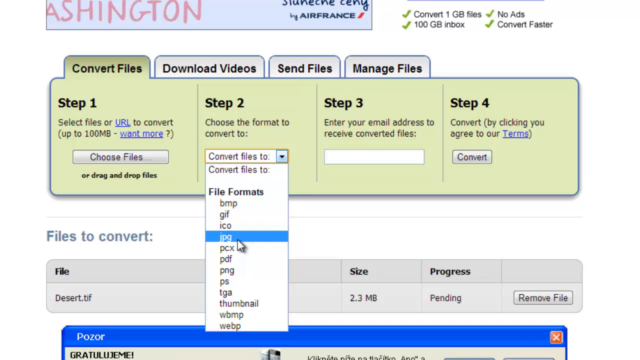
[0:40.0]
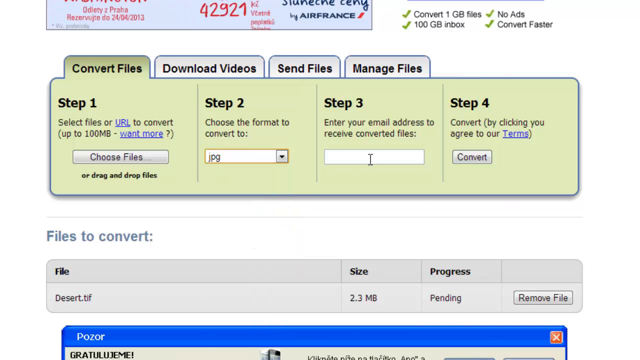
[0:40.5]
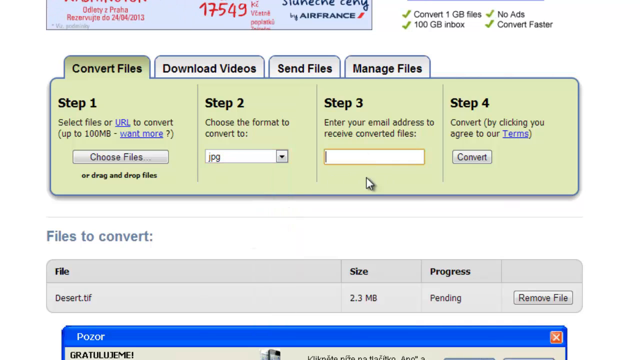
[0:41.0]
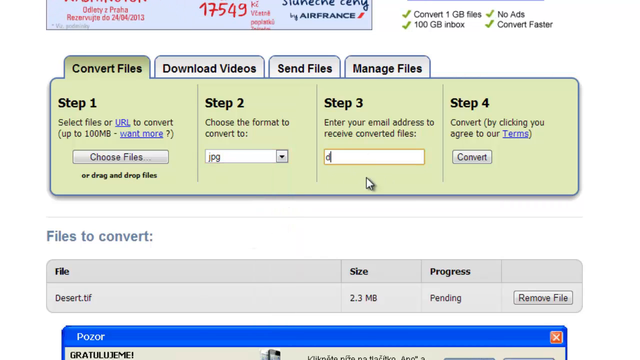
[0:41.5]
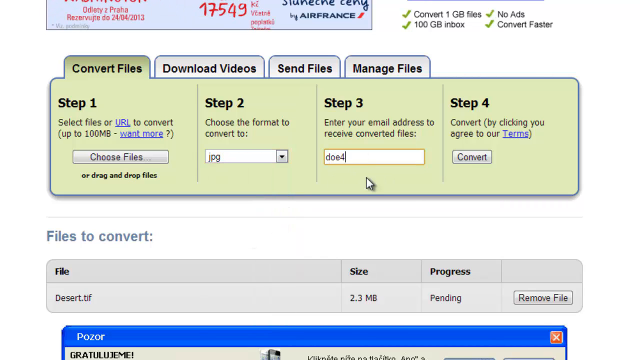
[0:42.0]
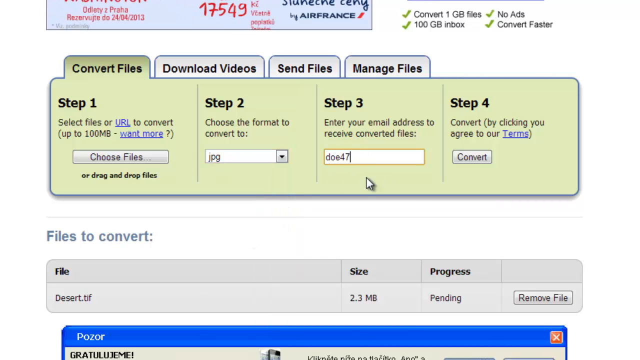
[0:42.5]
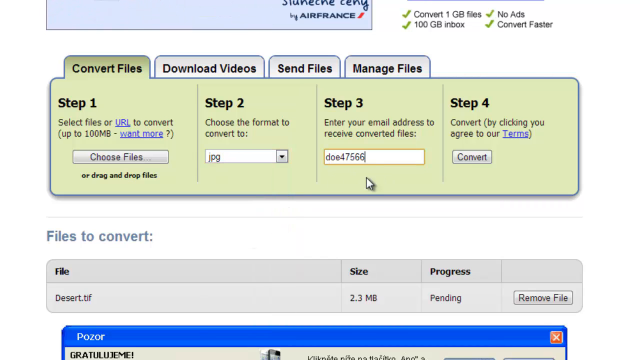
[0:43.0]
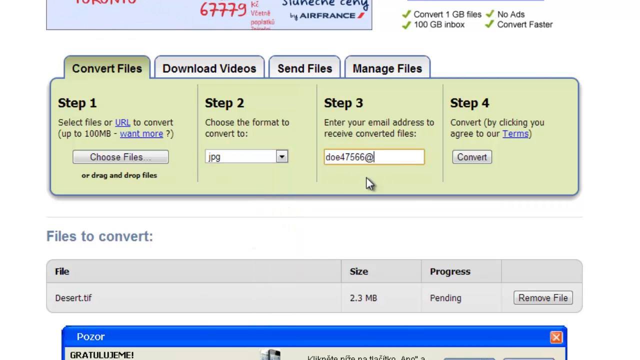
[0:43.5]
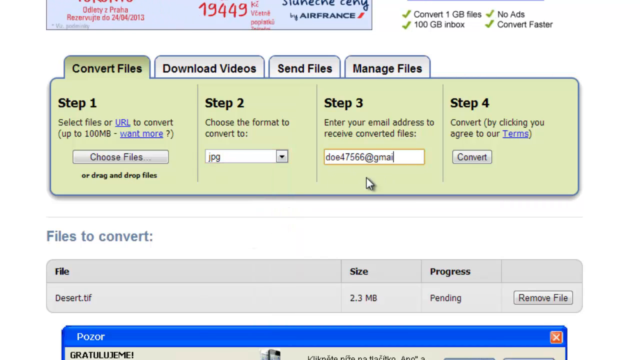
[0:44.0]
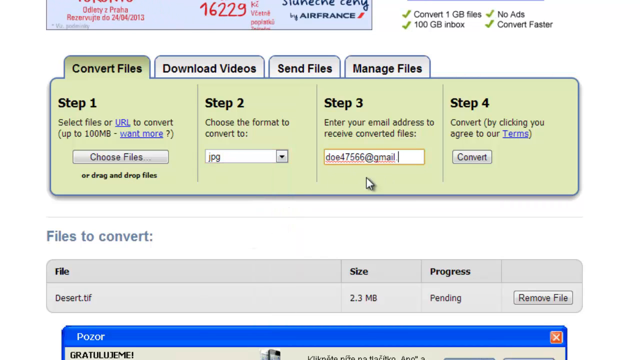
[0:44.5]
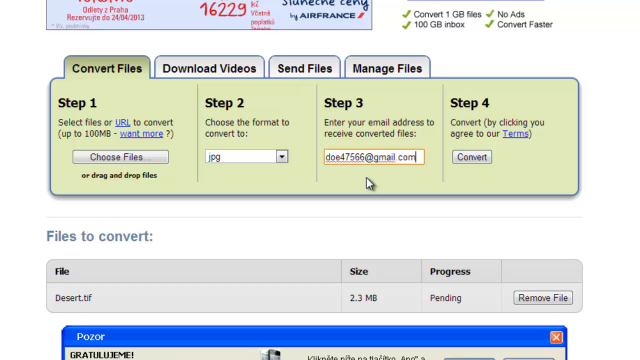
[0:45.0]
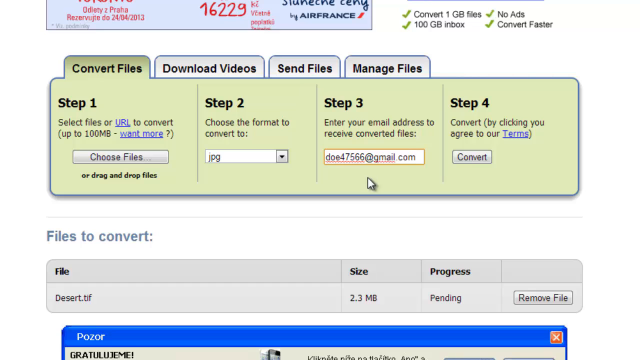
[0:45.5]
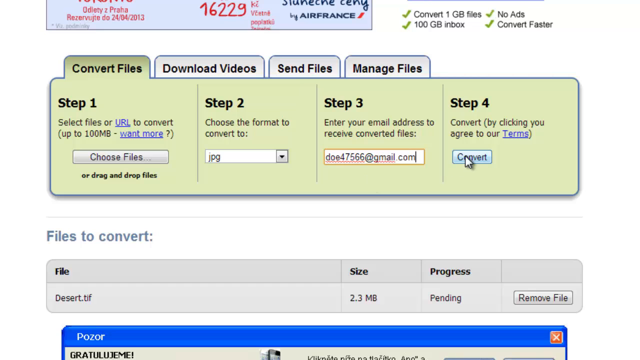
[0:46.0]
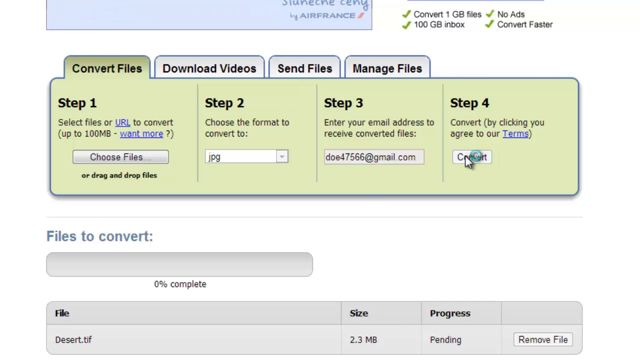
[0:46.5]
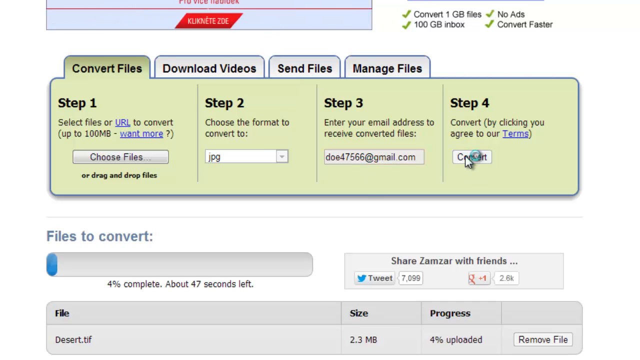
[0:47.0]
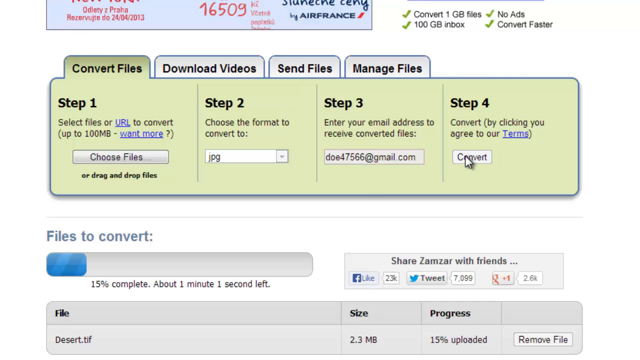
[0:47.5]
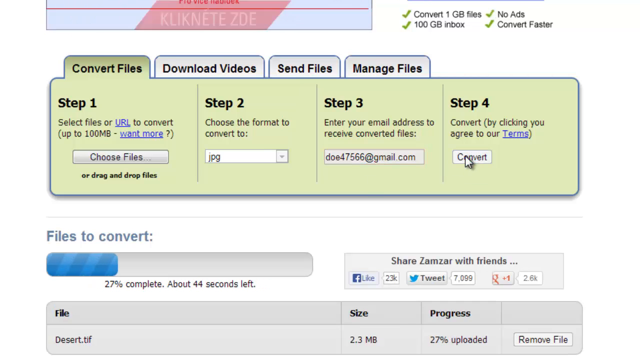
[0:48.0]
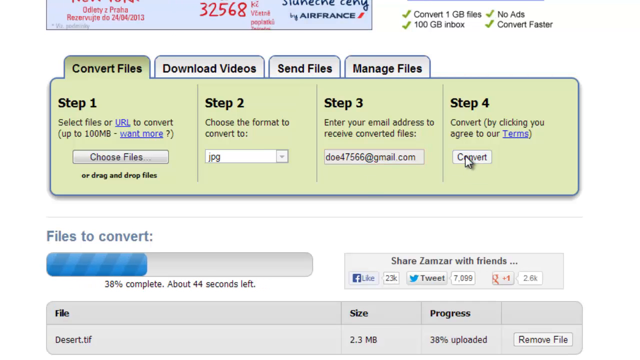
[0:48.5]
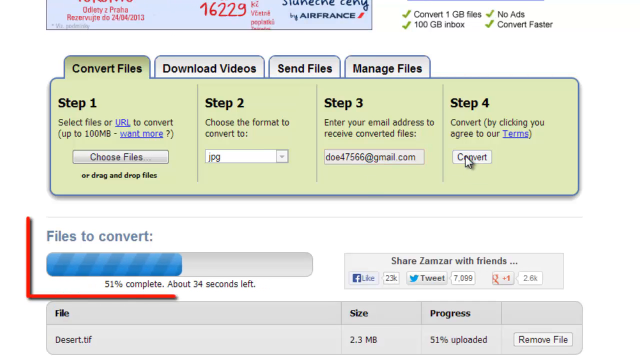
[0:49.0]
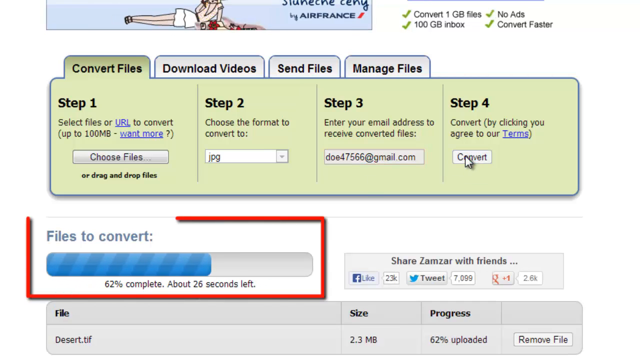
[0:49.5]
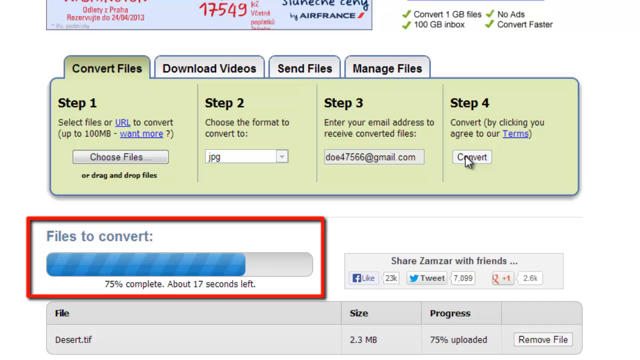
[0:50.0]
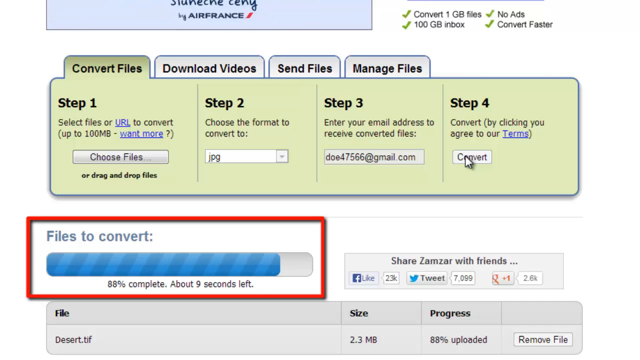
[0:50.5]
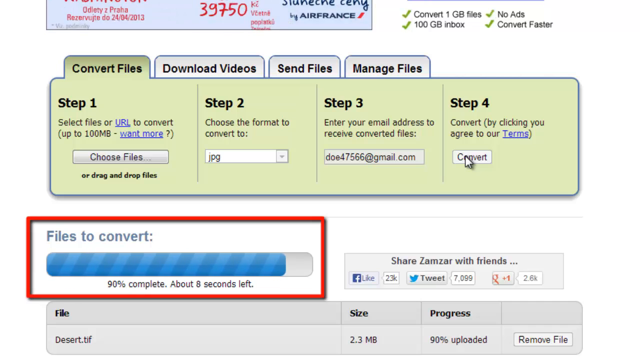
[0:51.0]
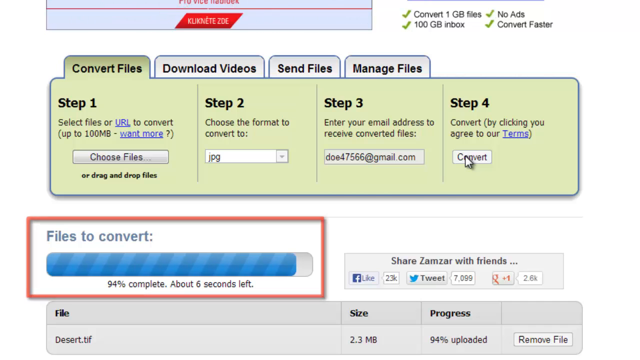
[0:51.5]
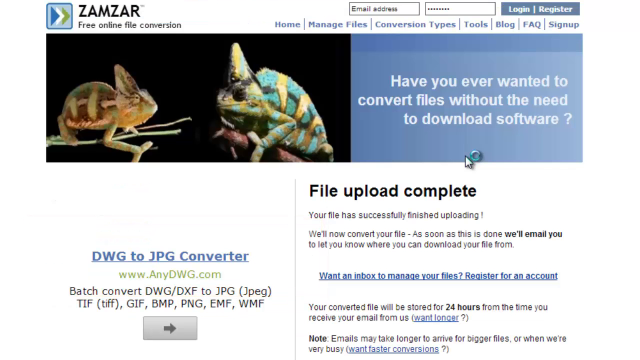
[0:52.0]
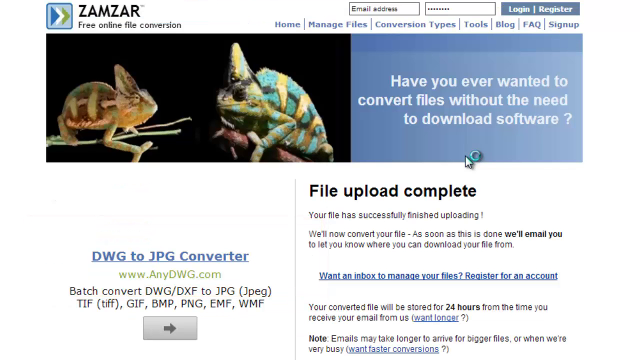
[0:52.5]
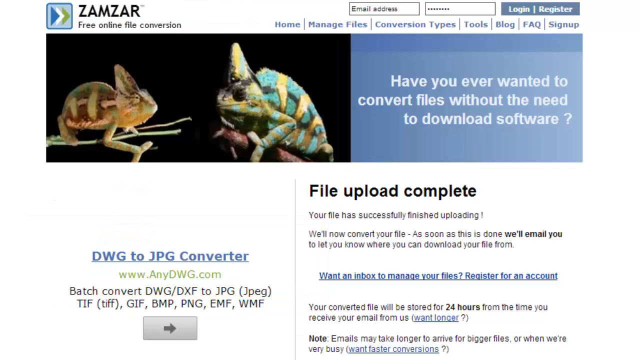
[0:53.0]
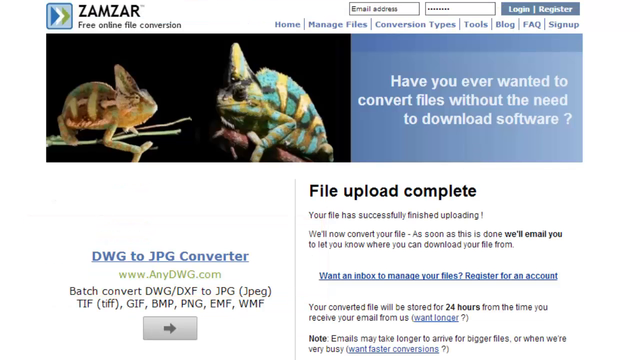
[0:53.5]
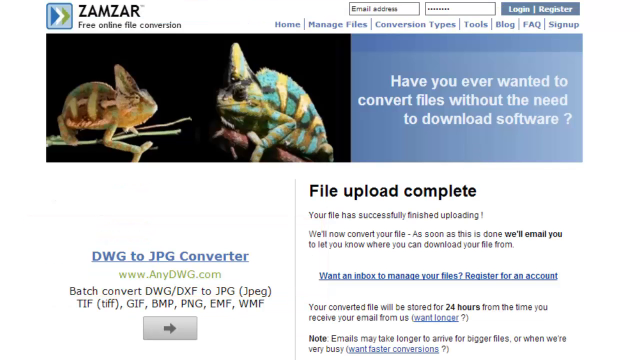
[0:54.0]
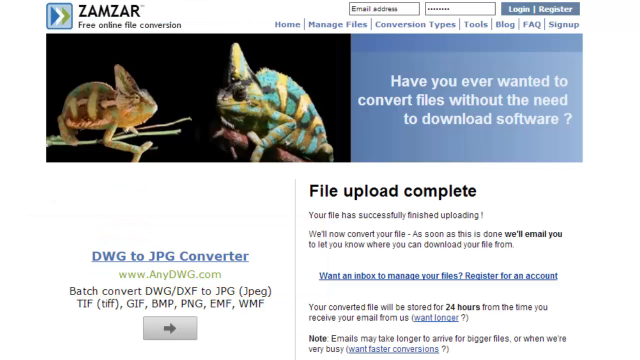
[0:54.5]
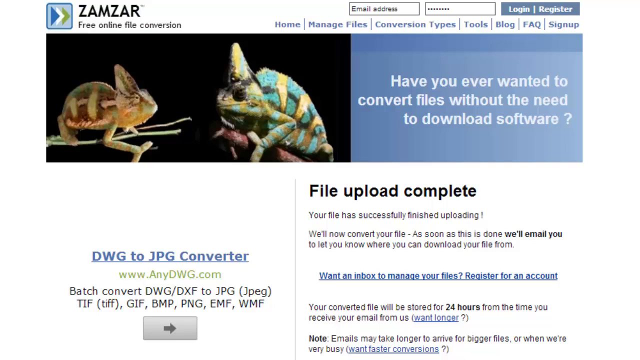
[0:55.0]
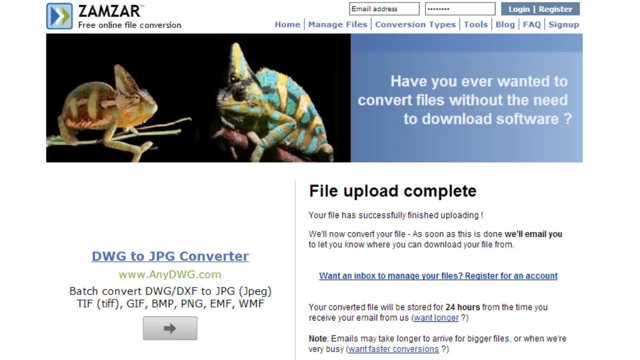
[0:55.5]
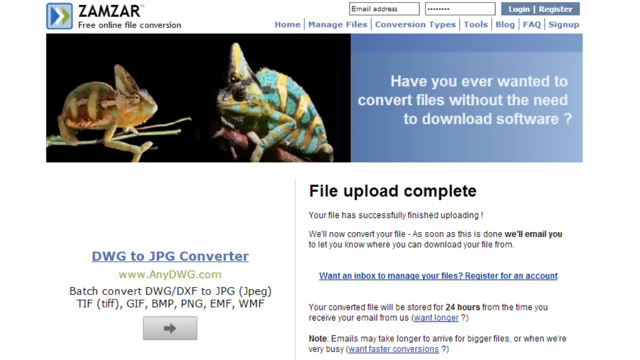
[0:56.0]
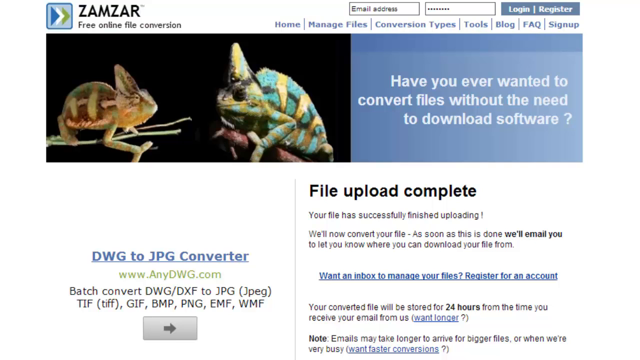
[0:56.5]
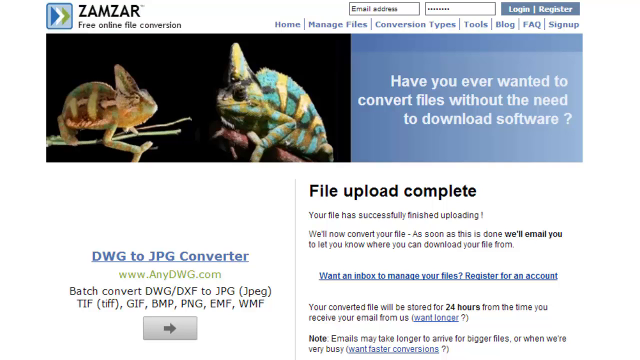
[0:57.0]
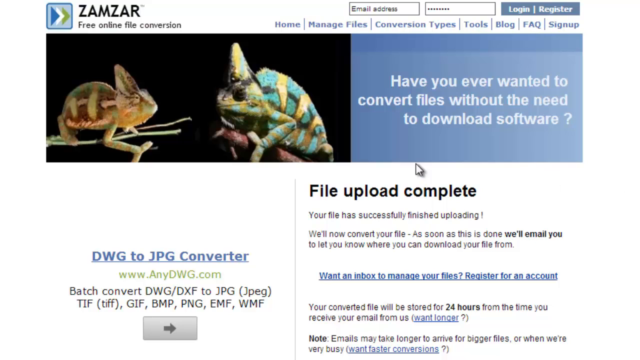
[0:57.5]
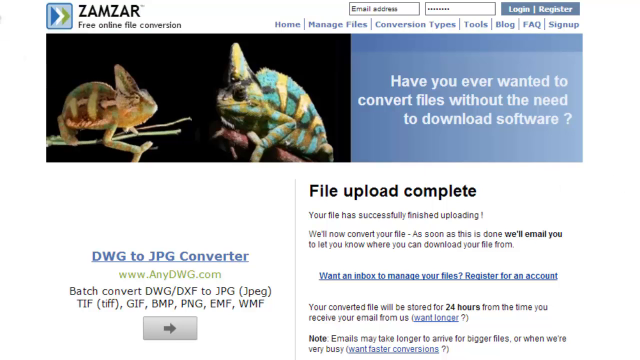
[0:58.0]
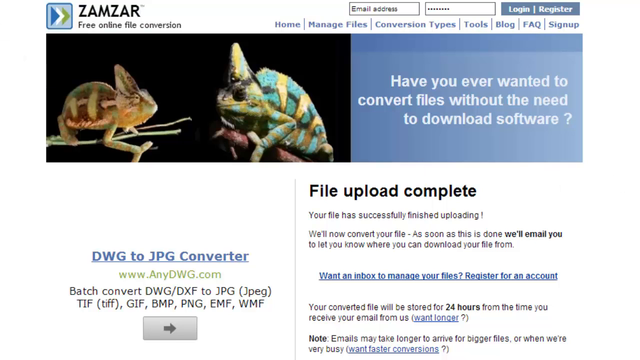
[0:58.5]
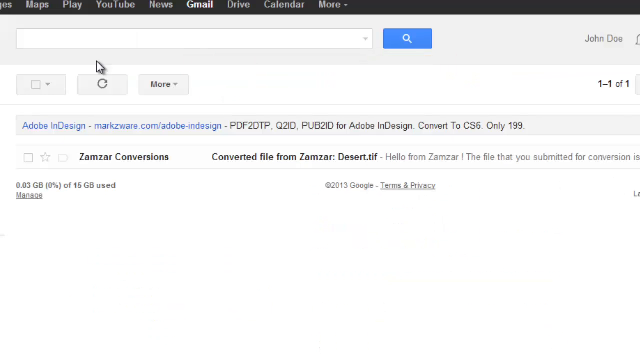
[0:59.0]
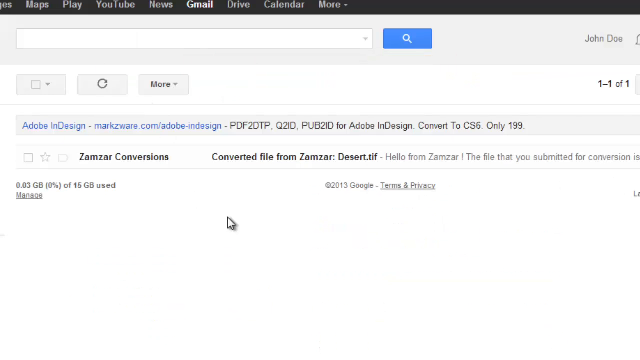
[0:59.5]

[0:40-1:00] JPEG has been chosen and the user is on step three, entering an email address ending in "4766 gmail.com" under "enter your email address to receive the converted files". Step four follows, and the page identifies itself as a "DWG to JPEG converter" and Zamzar "free online file conversion". The conversion is very fast. It then looks like the user starts to go to his email to get the converted file. The website shows "Convert one gigabyte files 100 gigabyte inbox no ads", has something like Geicos on it, and includes the text "Have you ever wanted to convert files without the need to download something".